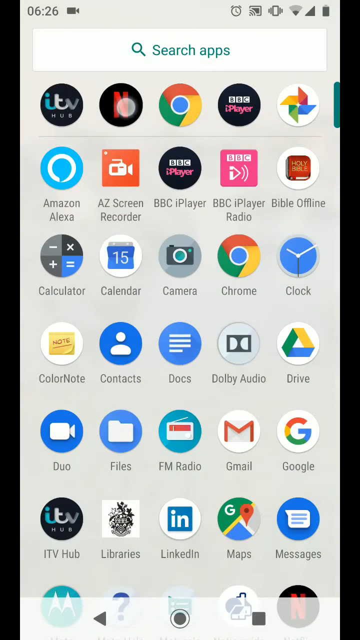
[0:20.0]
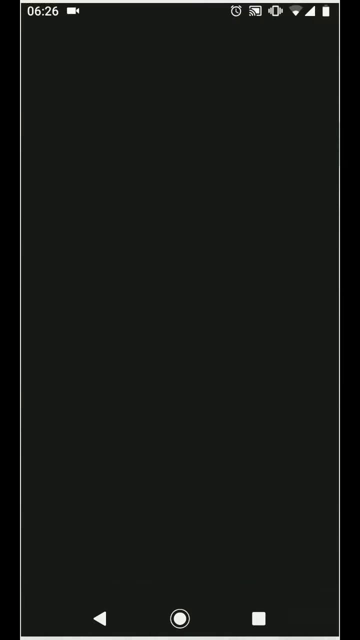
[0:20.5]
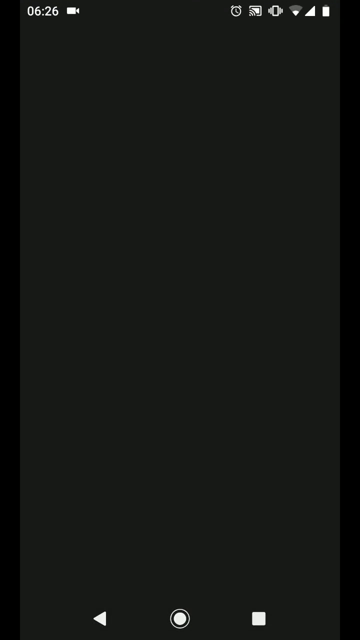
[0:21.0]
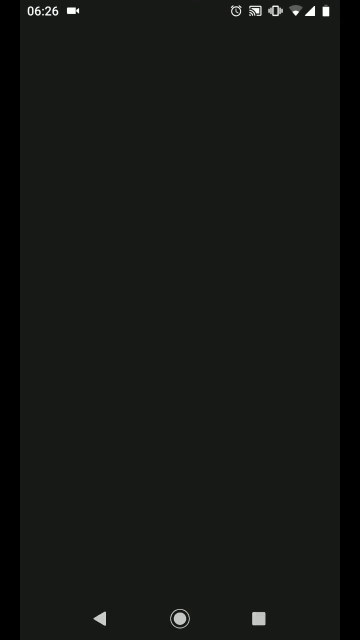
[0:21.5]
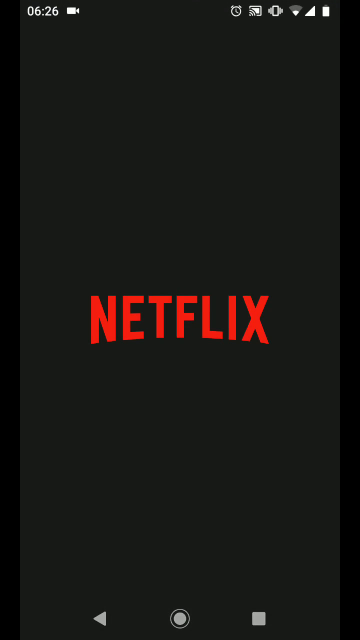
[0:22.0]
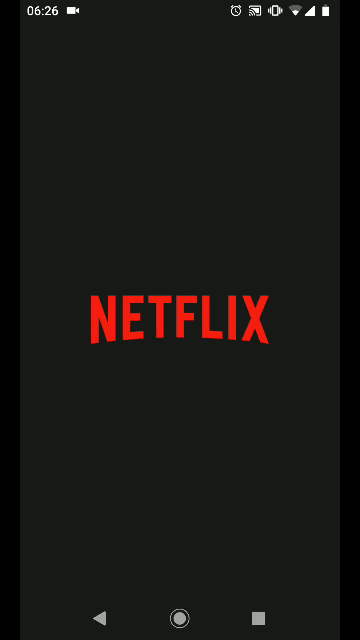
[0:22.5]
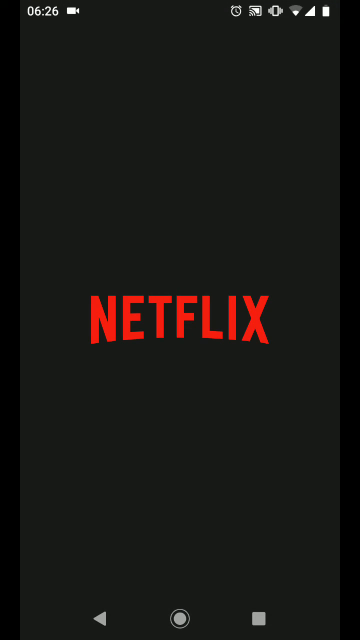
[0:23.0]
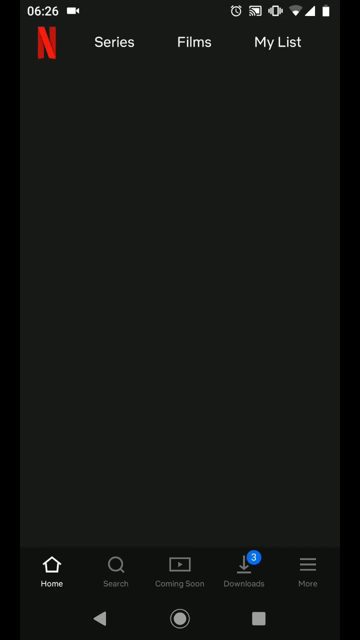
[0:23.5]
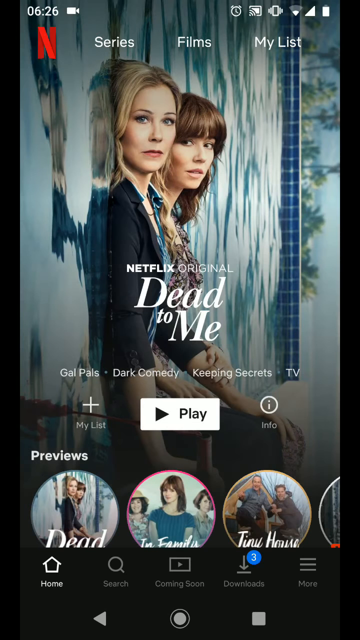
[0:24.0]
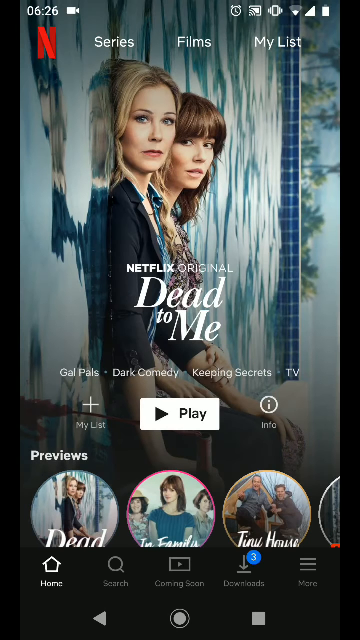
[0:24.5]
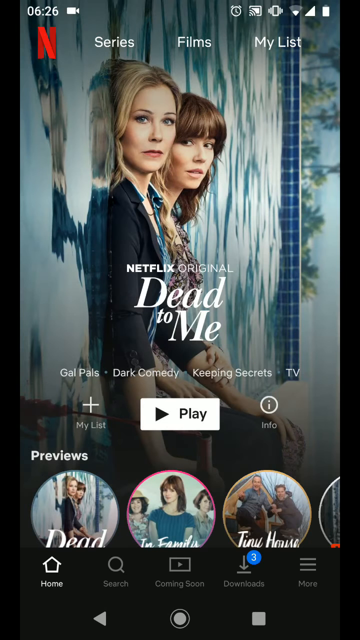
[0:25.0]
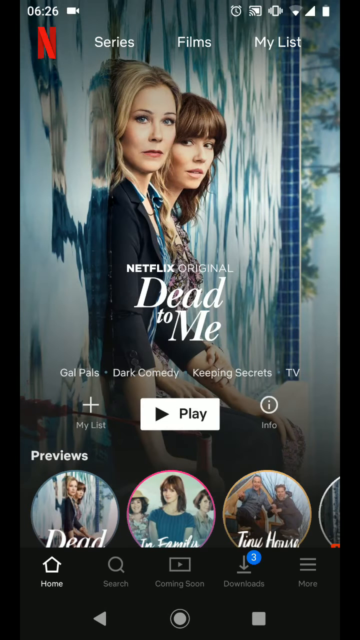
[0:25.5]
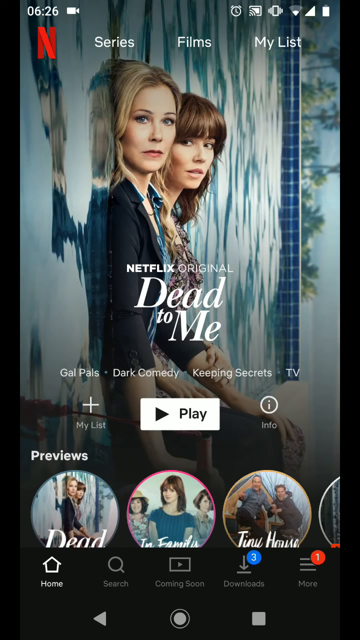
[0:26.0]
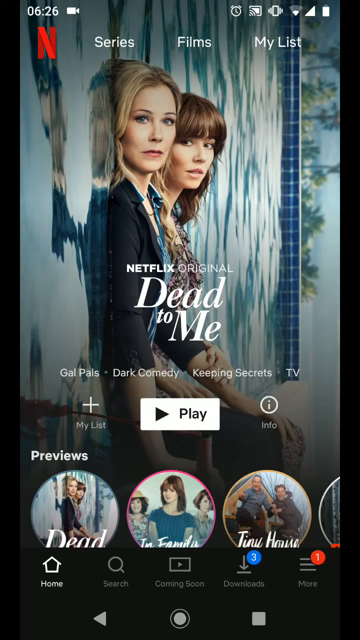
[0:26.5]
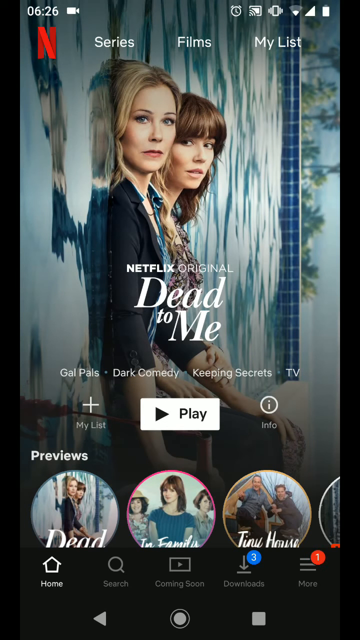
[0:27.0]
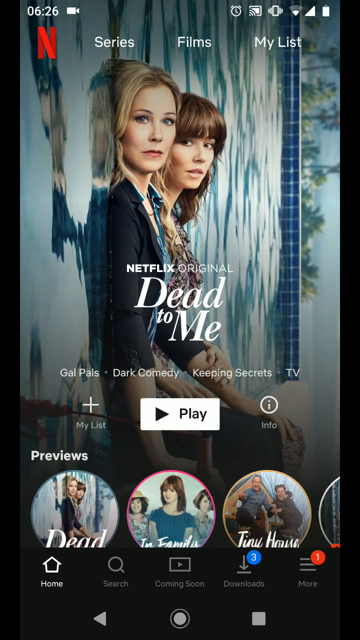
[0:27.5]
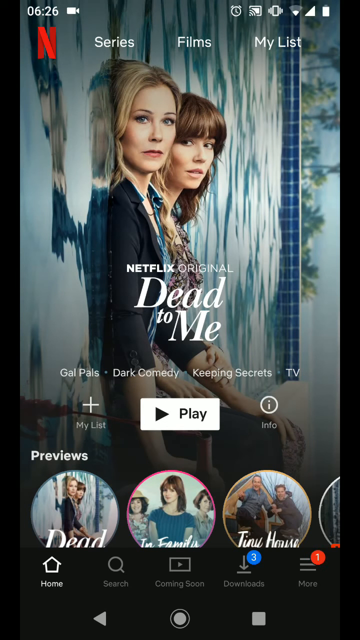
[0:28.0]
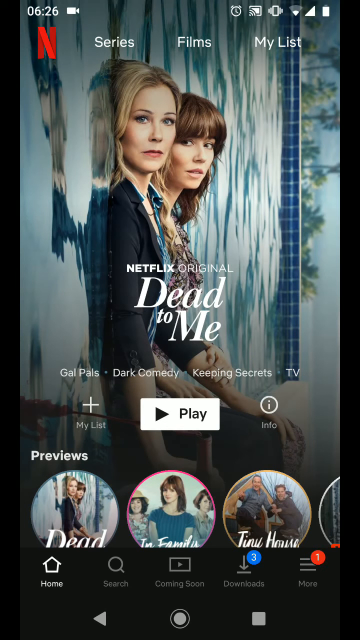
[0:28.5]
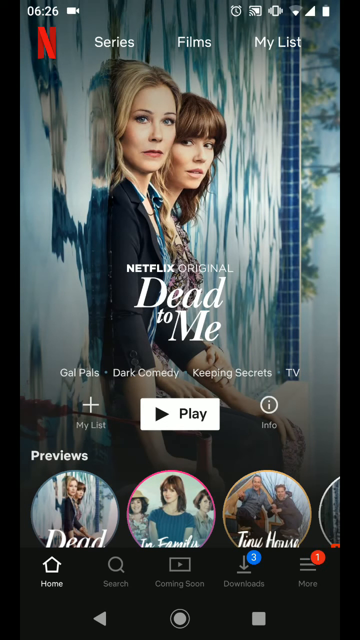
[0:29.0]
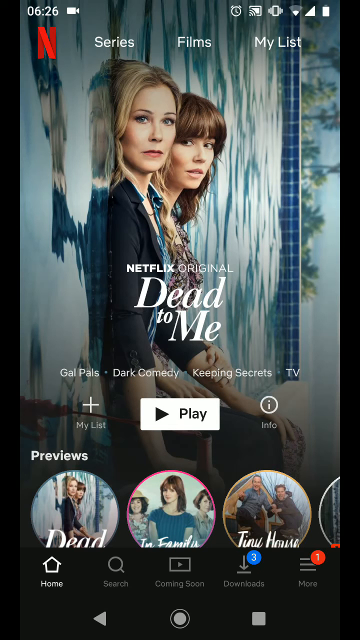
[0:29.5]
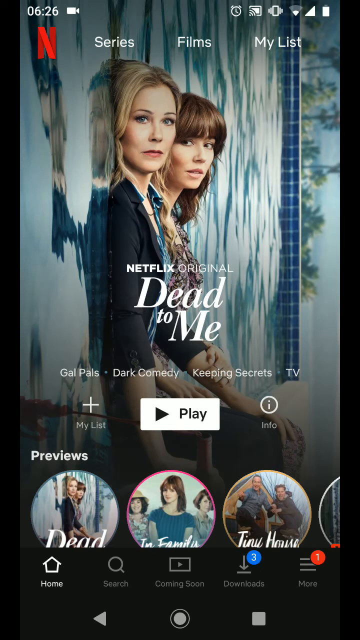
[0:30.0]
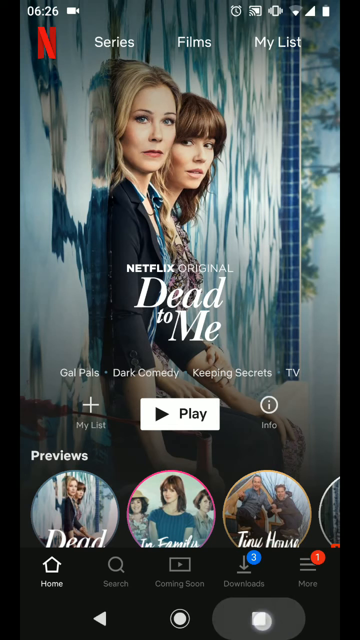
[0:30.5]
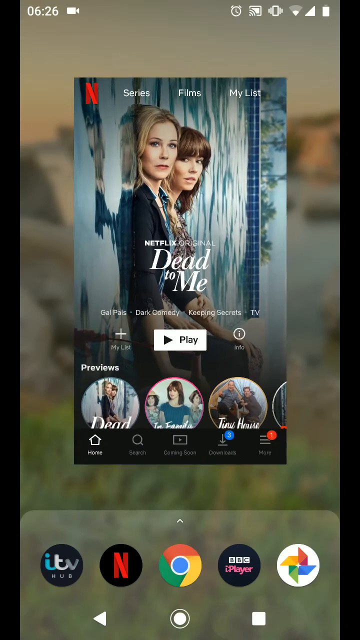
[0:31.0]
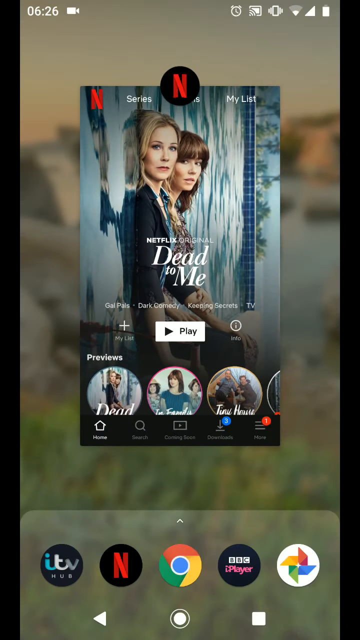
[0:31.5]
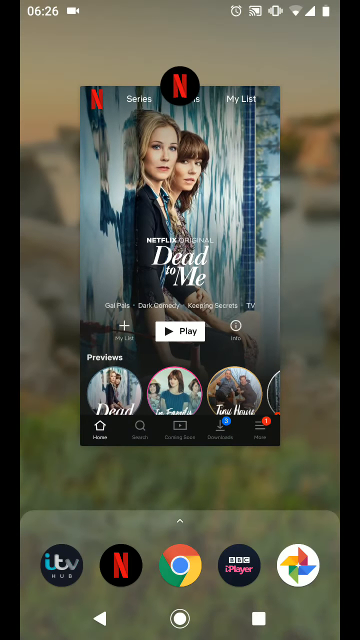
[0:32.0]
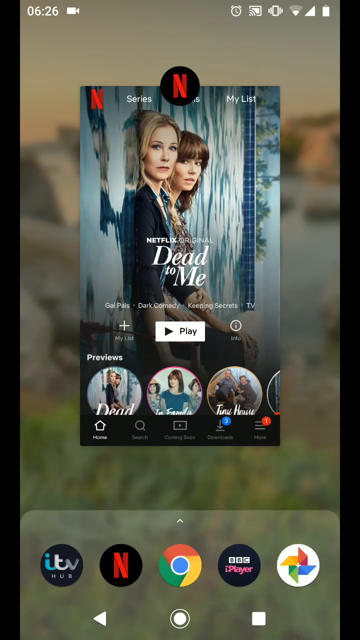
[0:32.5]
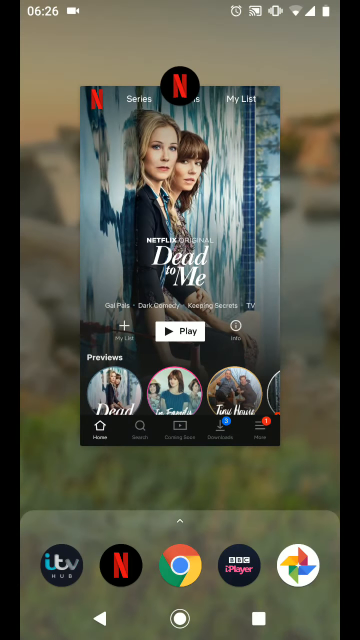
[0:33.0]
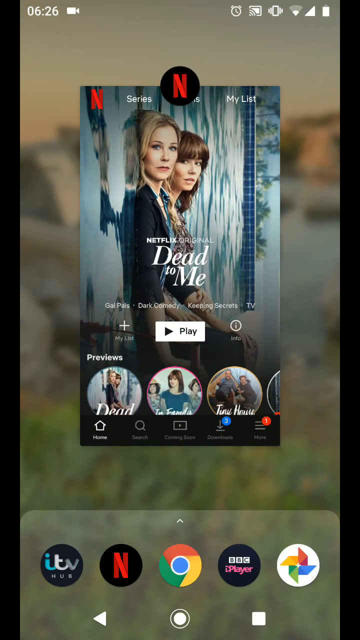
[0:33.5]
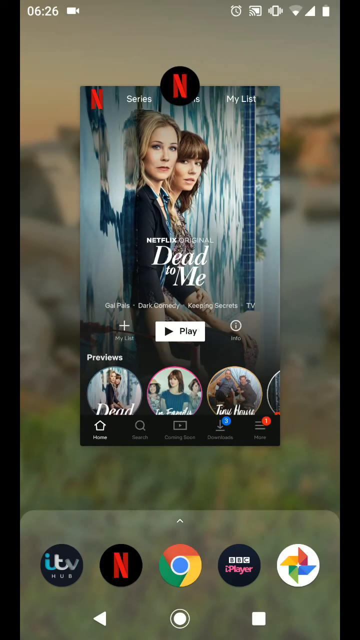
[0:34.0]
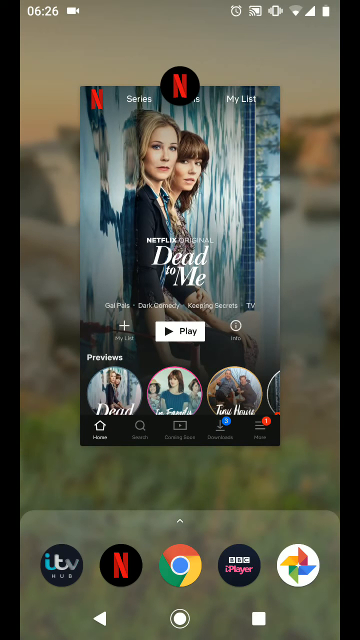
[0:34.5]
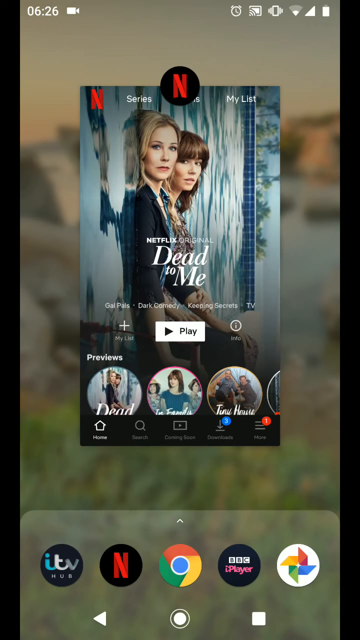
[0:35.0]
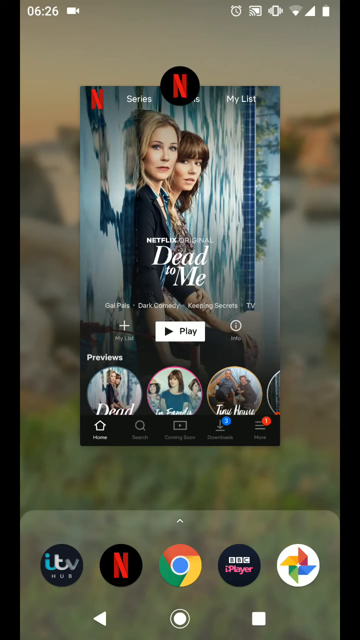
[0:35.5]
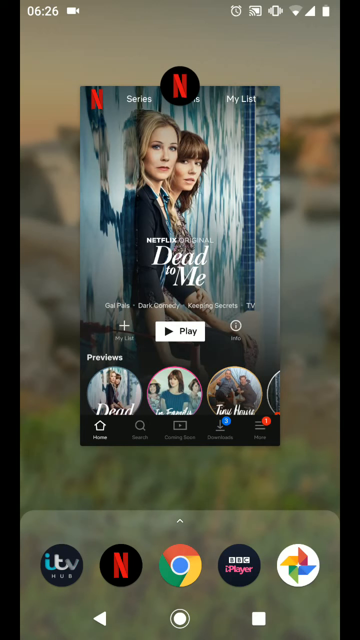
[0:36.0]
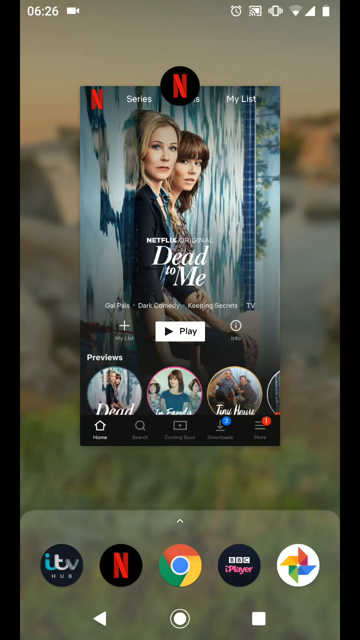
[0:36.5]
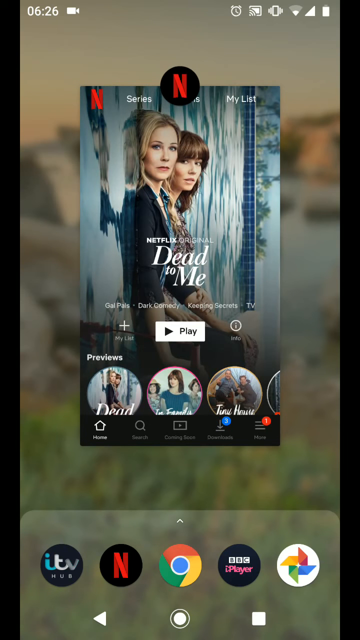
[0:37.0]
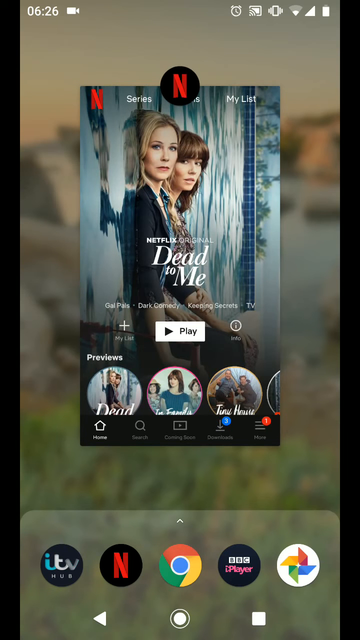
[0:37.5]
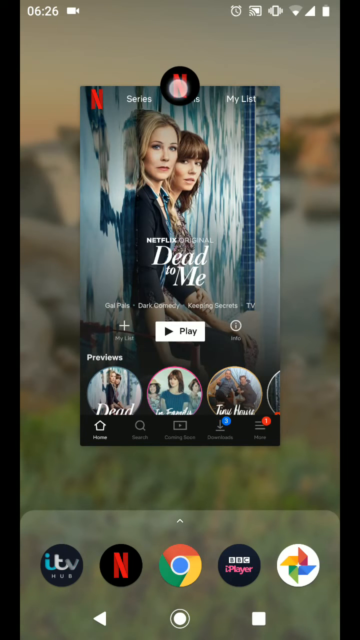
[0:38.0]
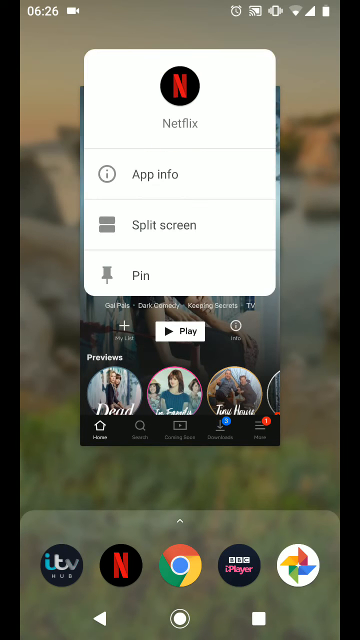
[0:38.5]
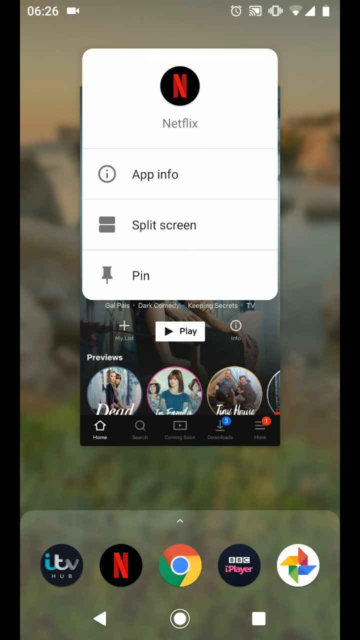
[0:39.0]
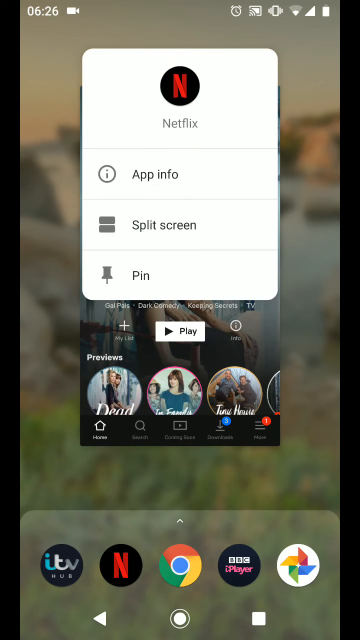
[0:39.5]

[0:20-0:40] The screen changes from the home page to a bunch of additional icons, and the owner of the Android phone seems to be navigating through the phone. The Netflix icon is selected and Netflix opens. Two ladies appear on the screen, in what seems to be a show called Dead to Me; one has blonde hair and the other auburn-looking hair, and both look towards the screen. The Netflix page has series, films and my list options, and a play button. The user seems to select the further options button instead of playing, and the user zooms out of the Netflix icon and clicks on it.